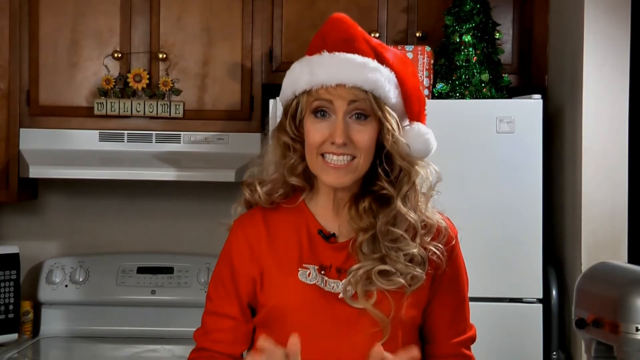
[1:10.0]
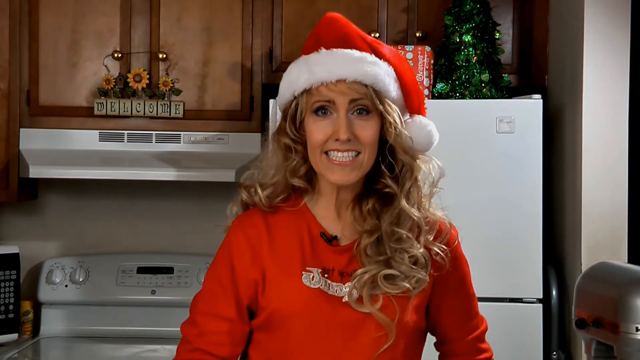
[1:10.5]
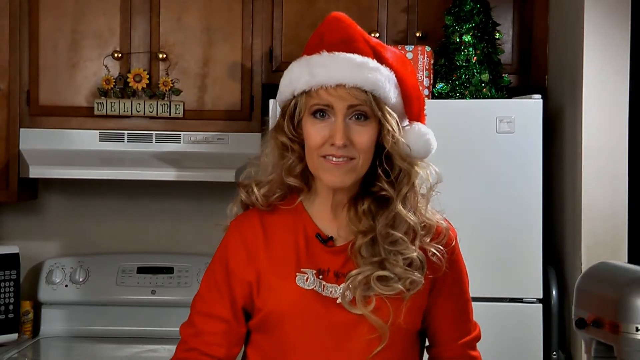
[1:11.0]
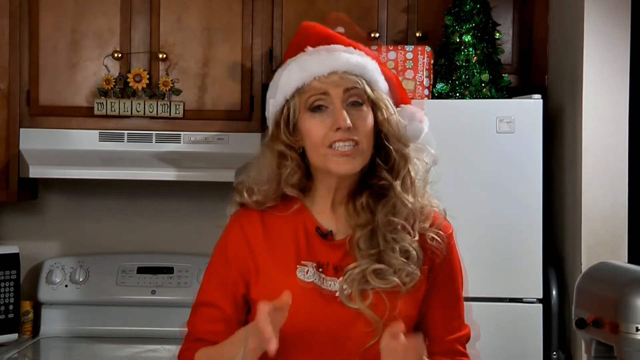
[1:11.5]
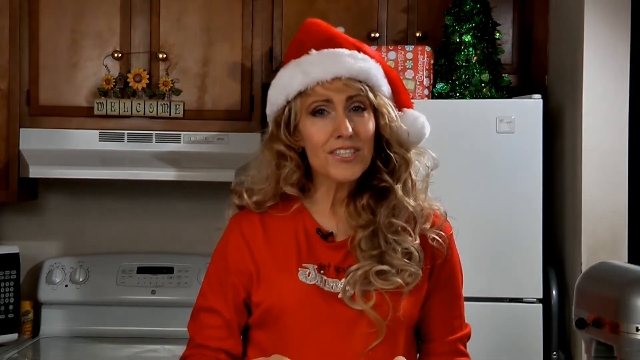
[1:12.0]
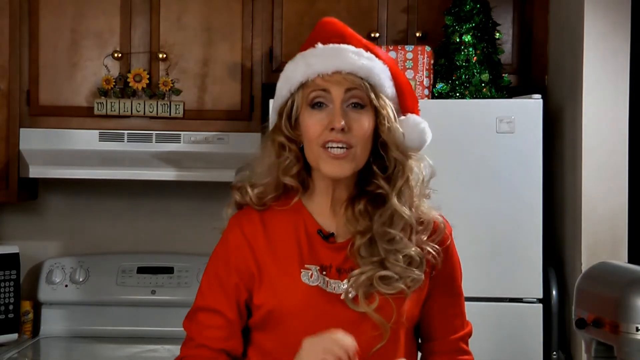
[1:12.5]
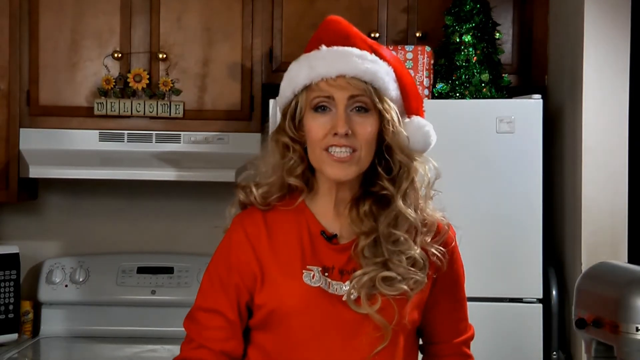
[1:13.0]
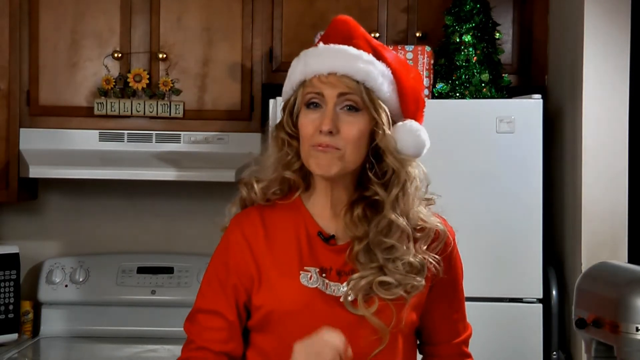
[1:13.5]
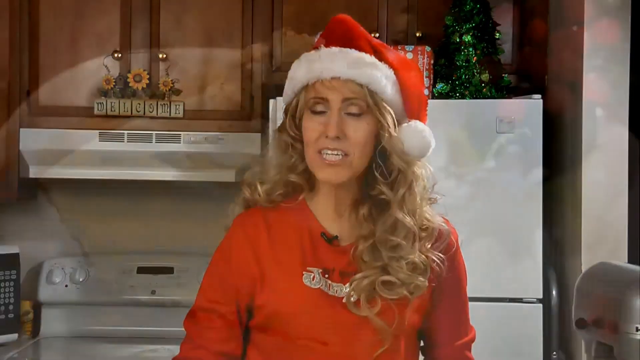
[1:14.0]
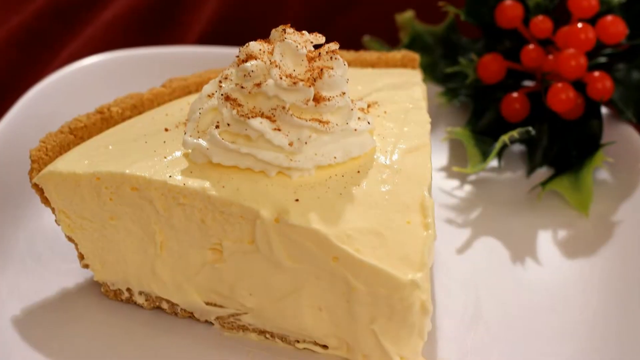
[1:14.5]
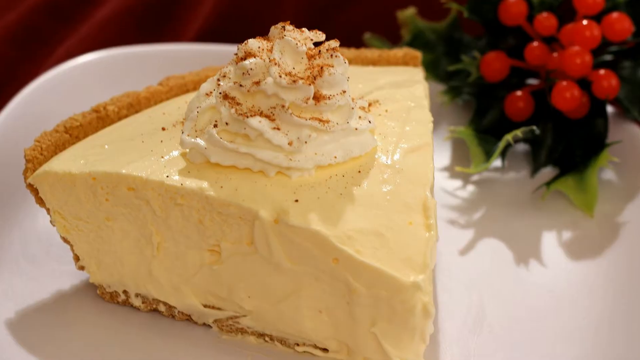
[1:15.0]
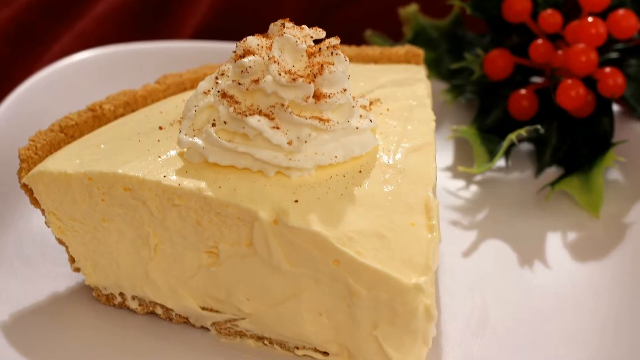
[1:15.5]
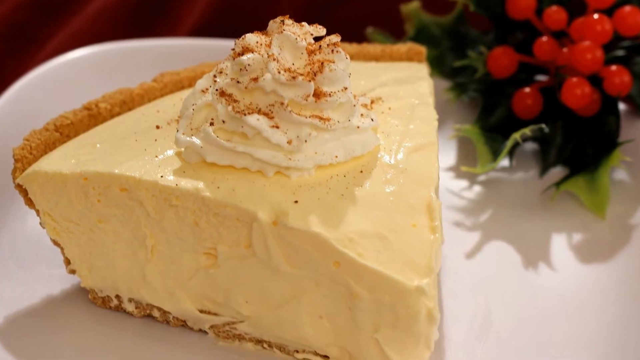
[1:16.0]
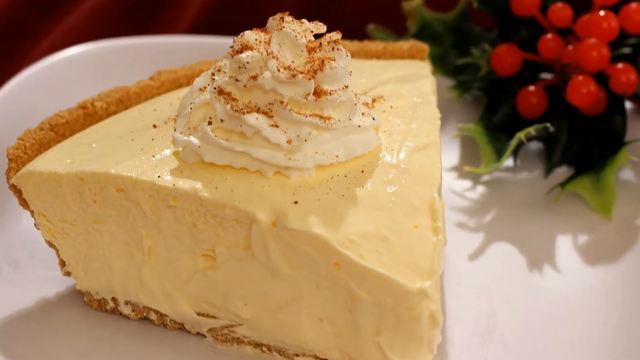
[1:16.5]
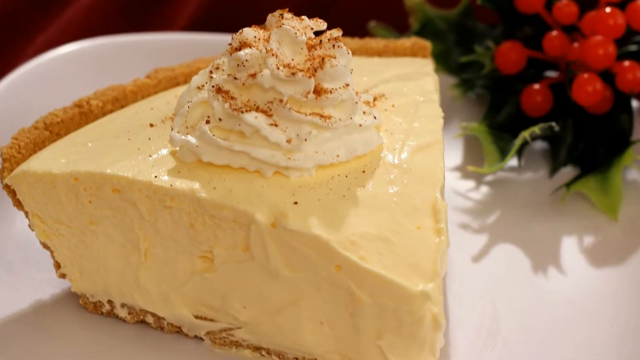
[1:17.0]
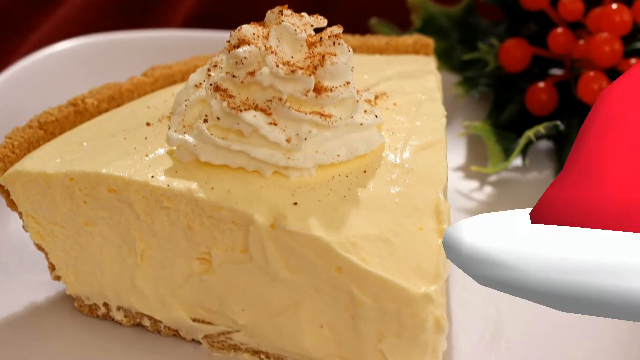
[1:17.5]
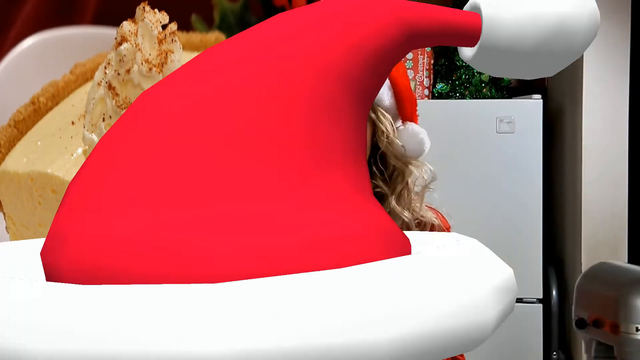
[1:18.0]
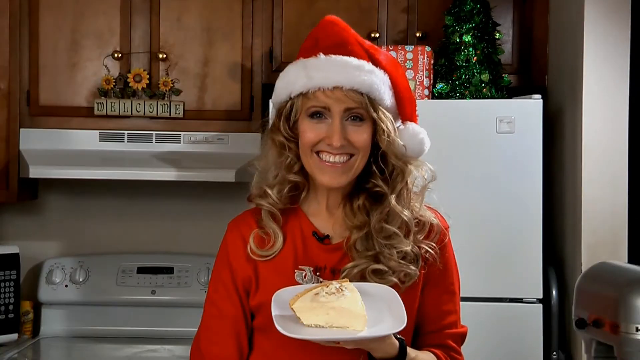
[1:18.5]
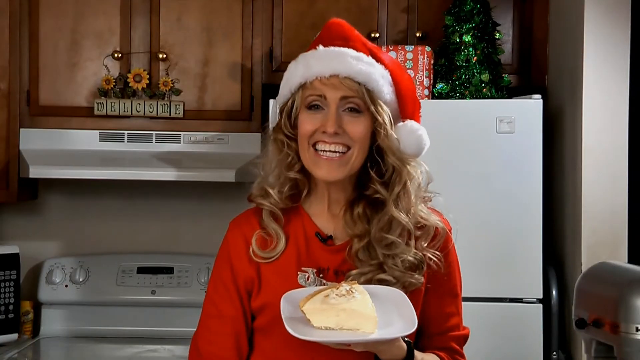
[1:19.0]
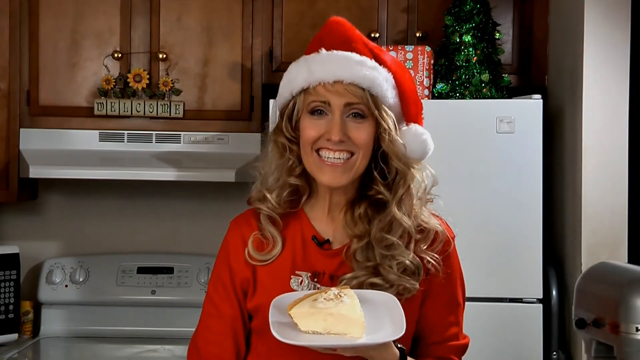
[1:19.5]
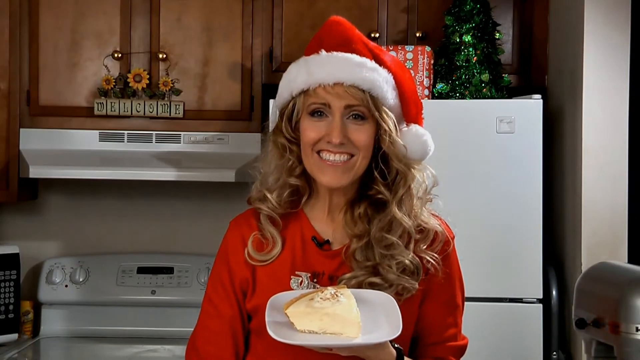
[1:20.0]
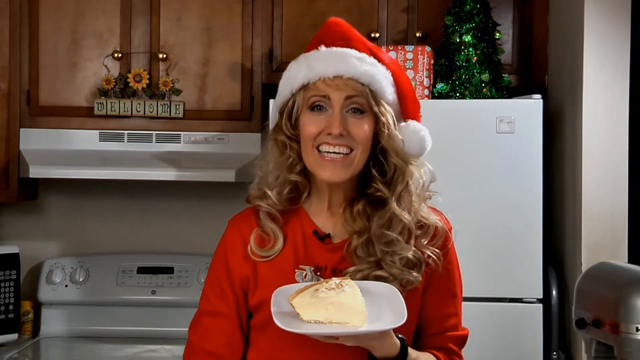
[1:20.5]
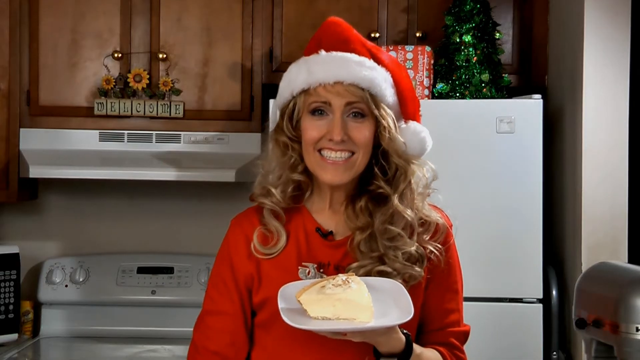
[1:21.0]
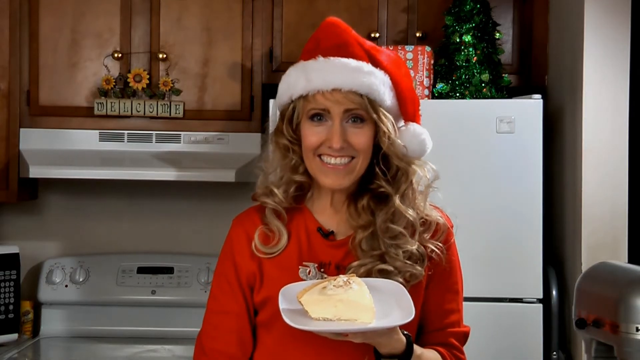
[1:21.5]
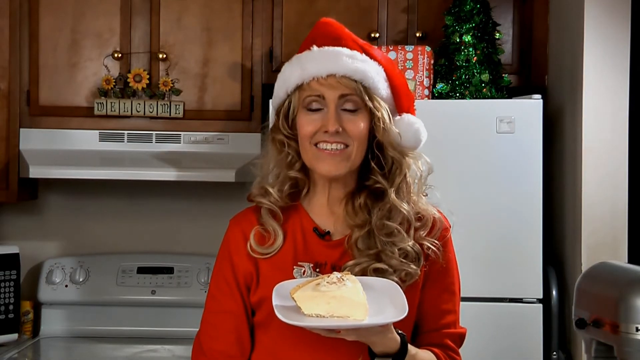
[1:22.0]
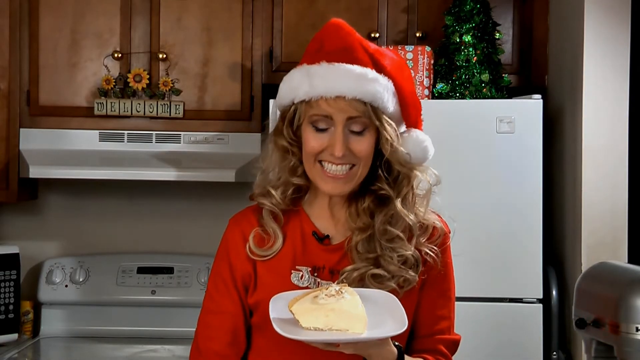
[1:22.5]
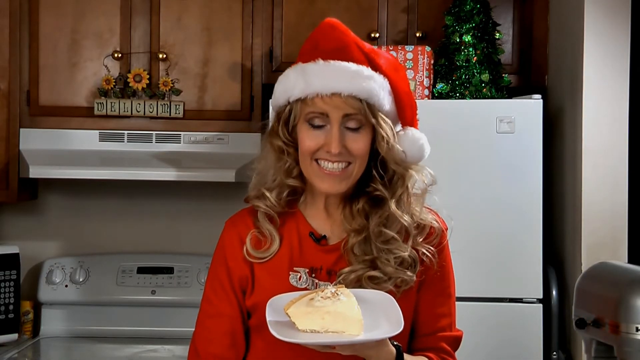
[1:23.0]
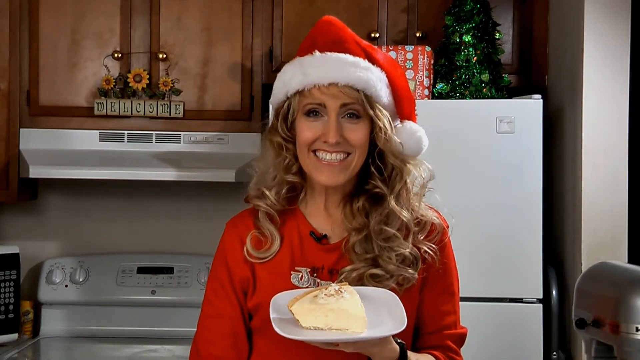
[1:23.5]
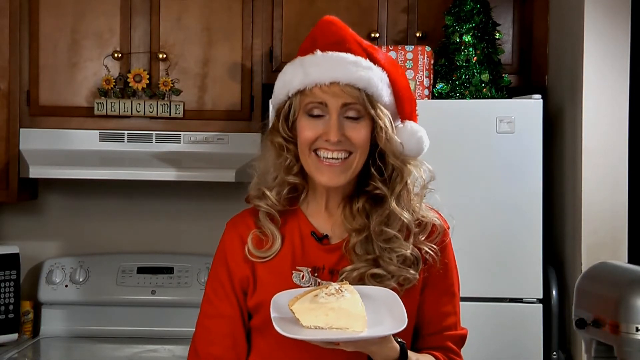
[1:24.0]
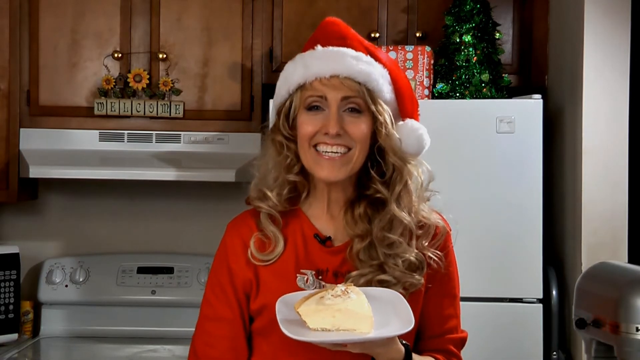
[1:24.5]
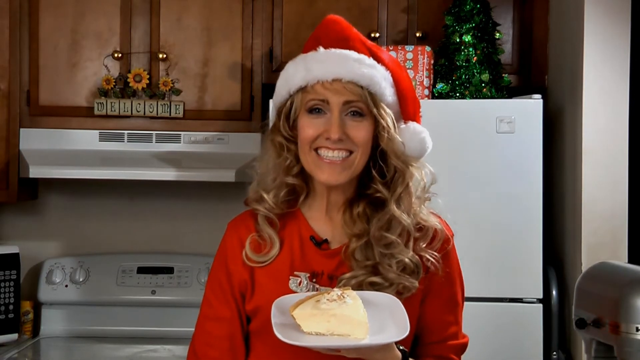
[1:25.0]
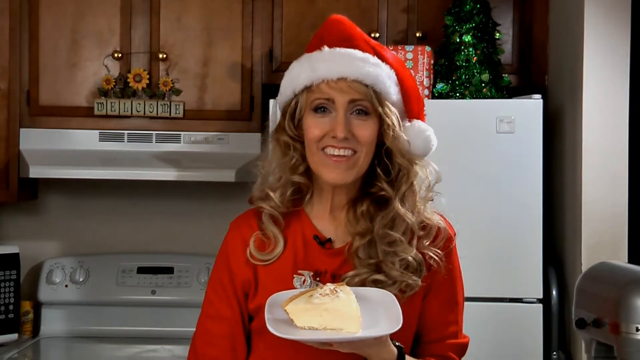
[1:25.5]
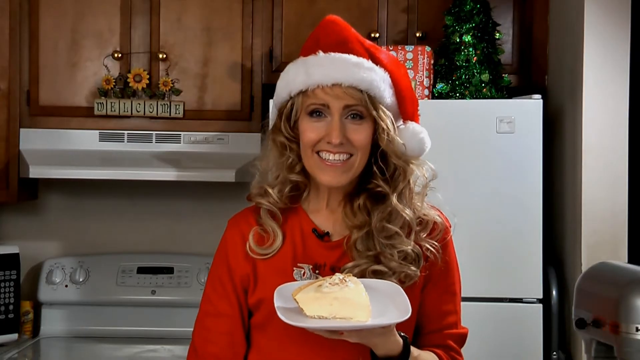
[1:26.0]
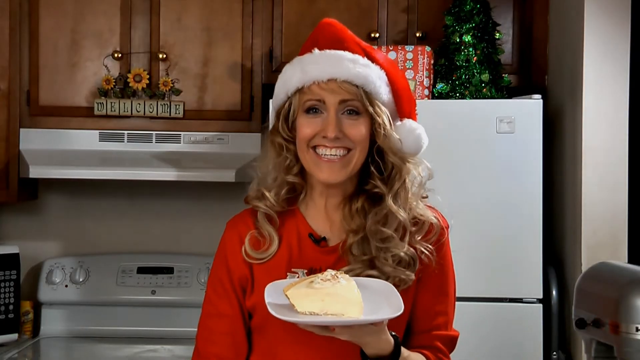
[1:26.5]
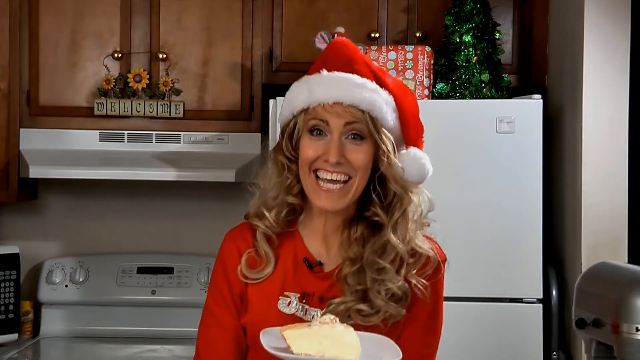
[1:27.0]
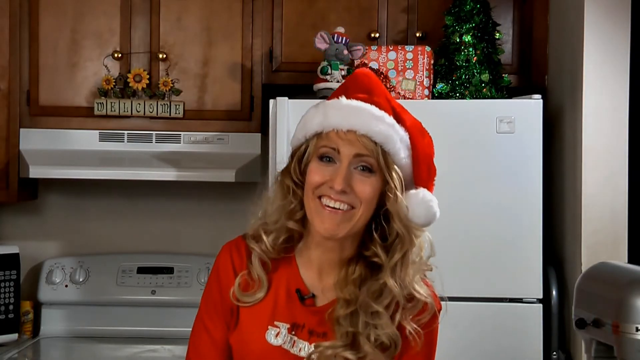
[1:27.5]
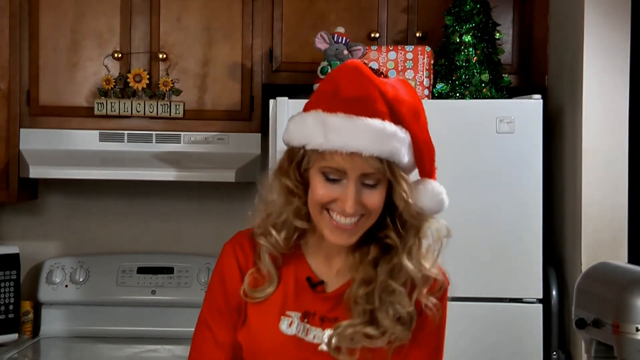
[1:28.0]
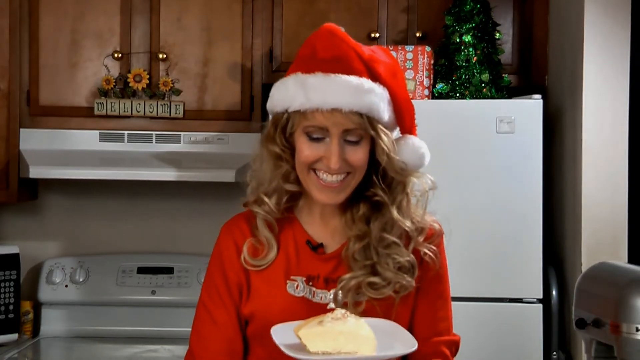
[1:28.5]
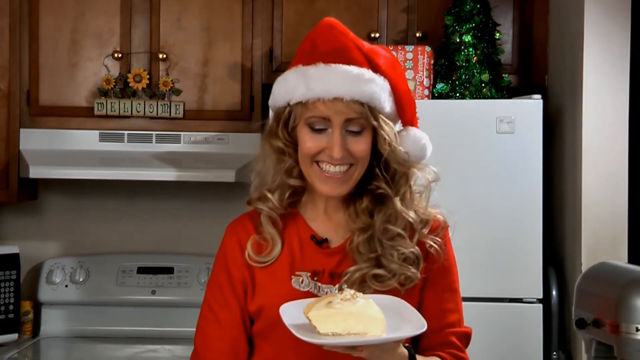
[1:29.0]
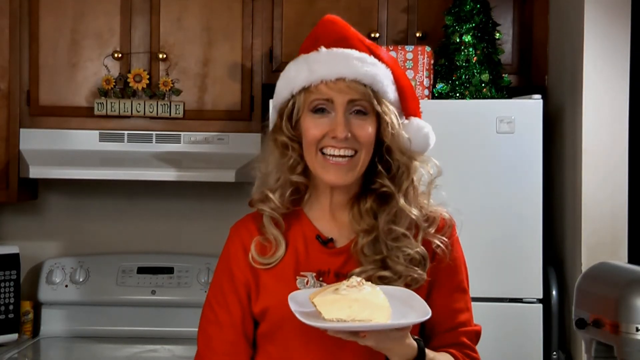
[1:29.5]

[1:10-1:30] The woman speaks to the camera, and there is another zoom in on the pie. A transition shows a Santa Claus hat moving across the screen from right to left. When the transition stops, she is holding the pie she made, which looks finished; there is a single slice on top of a small white bowl. She looks pretty happy and apparently done with the food. She holds the plate with her left hand the whole time, drops it a little lower so it goes out of view, and then immediately brings it back up into view.